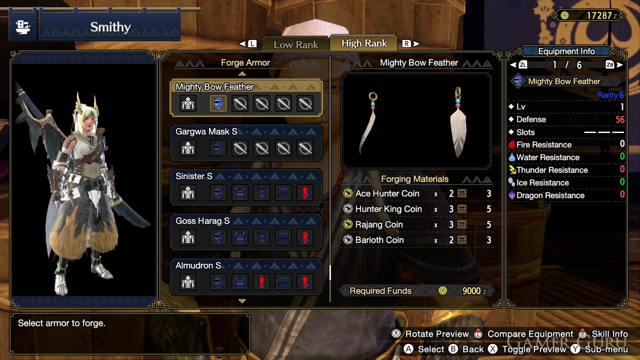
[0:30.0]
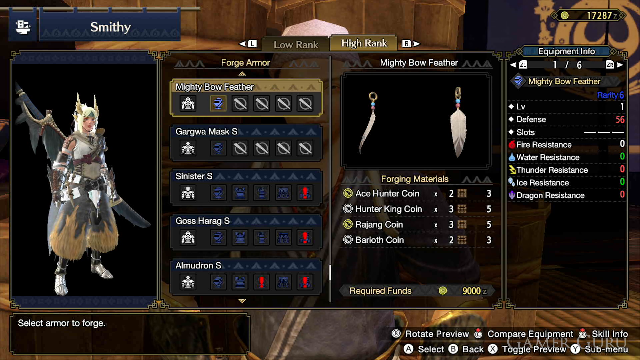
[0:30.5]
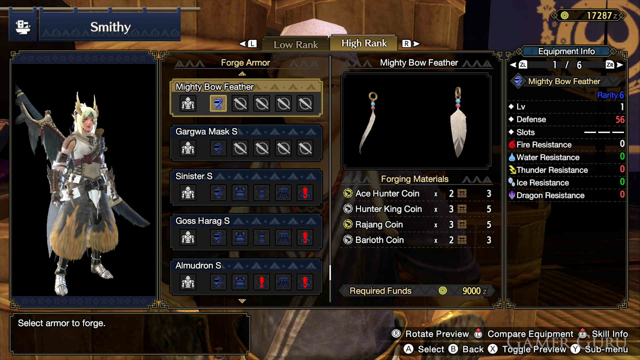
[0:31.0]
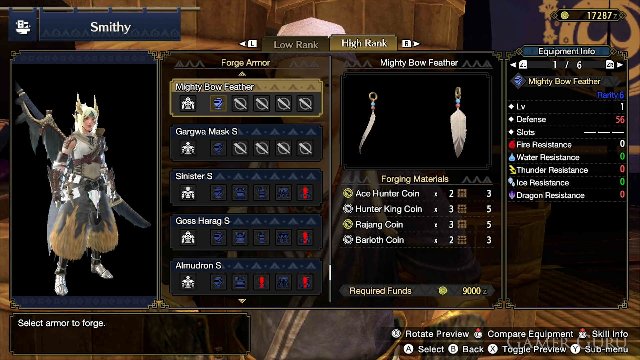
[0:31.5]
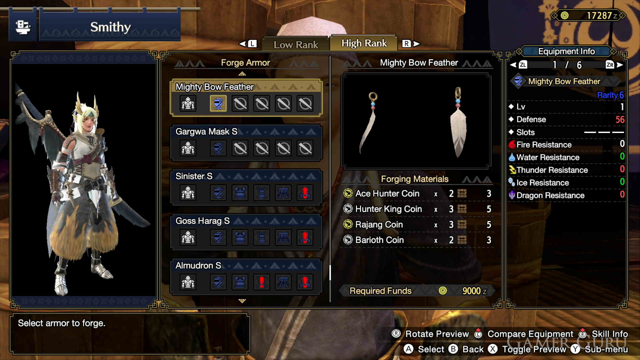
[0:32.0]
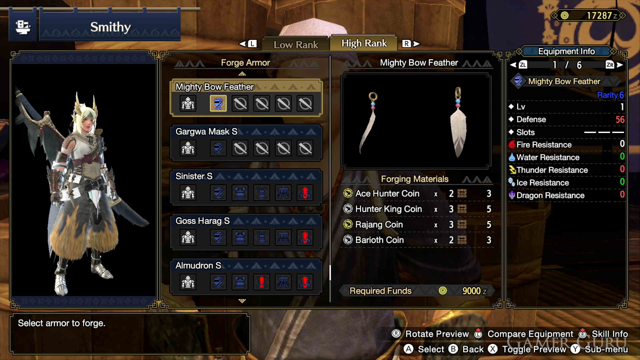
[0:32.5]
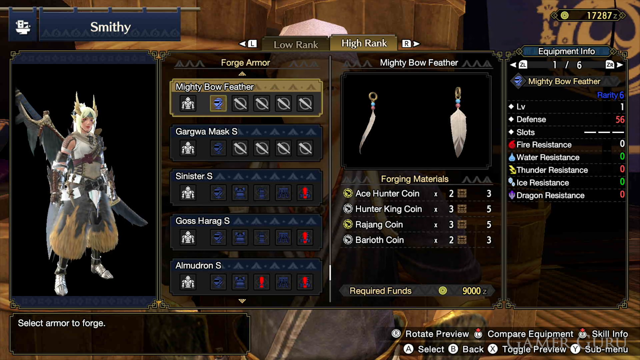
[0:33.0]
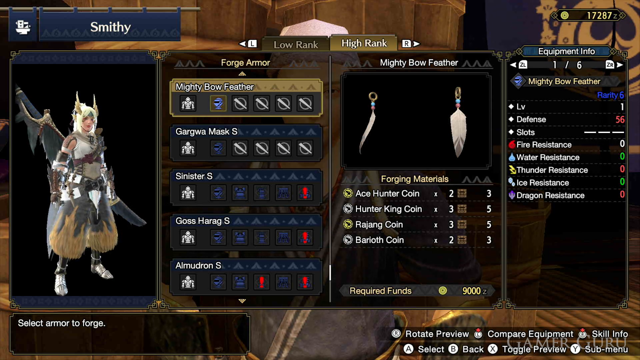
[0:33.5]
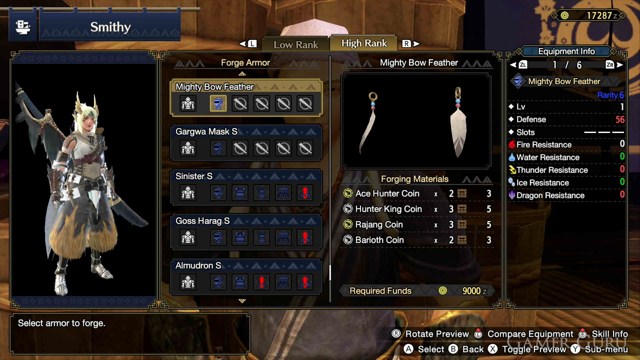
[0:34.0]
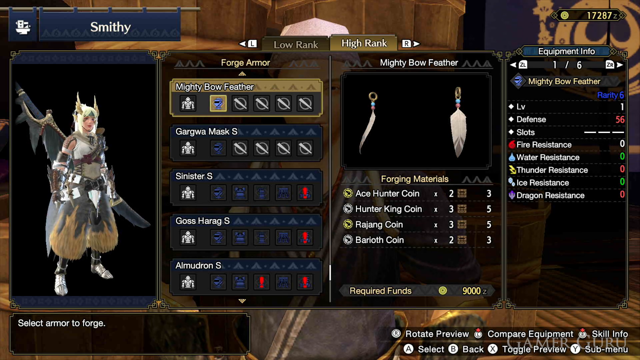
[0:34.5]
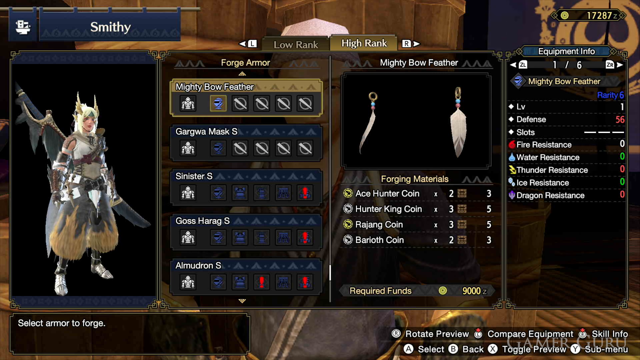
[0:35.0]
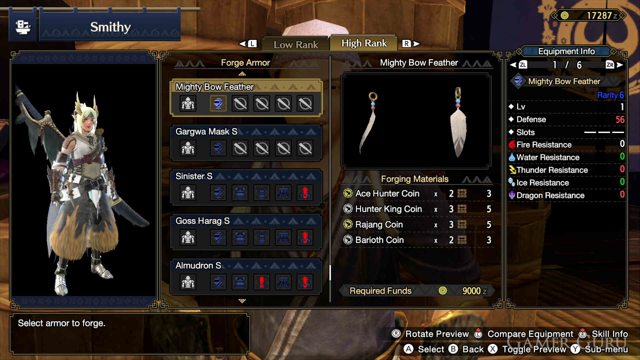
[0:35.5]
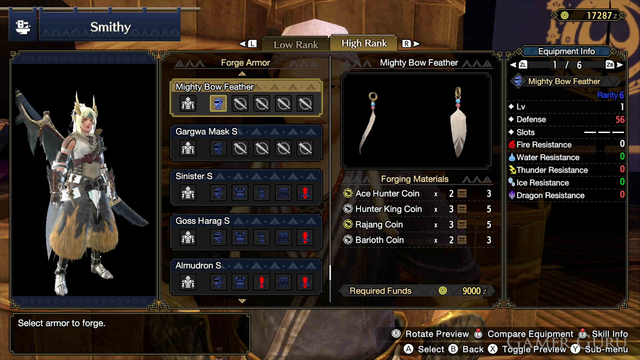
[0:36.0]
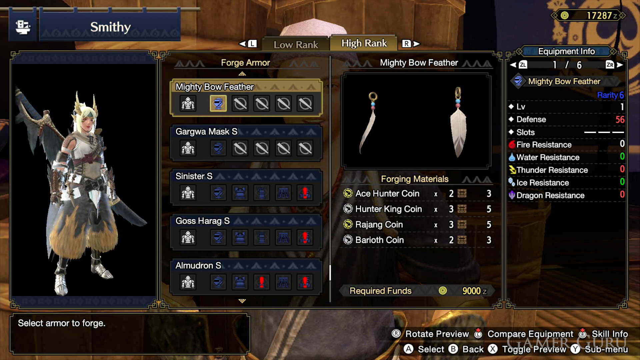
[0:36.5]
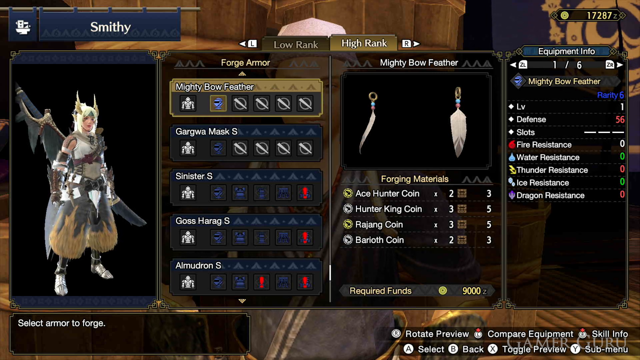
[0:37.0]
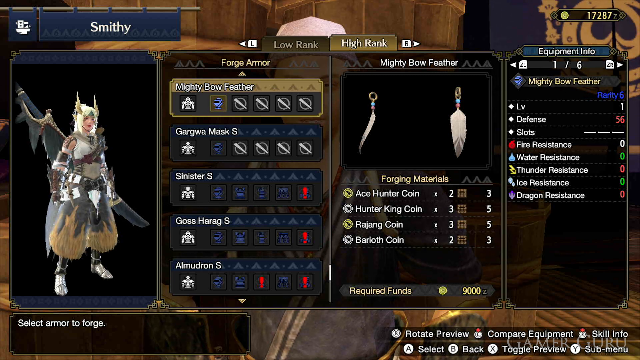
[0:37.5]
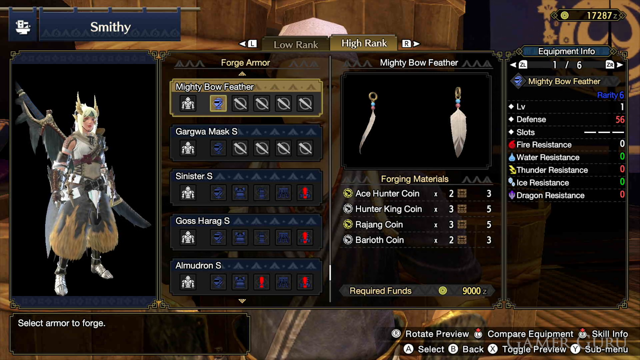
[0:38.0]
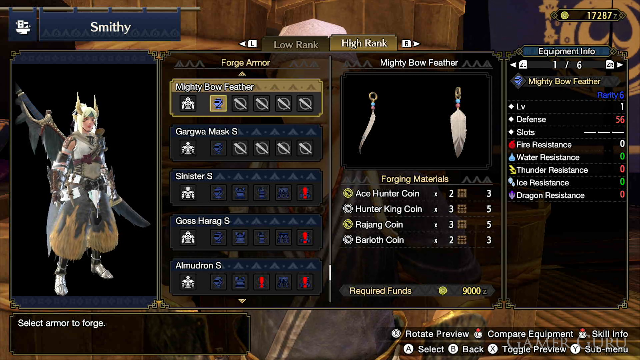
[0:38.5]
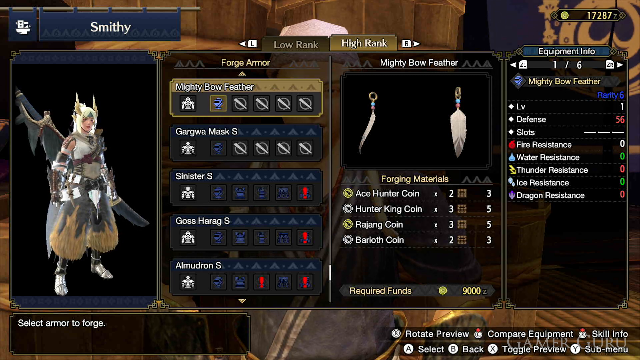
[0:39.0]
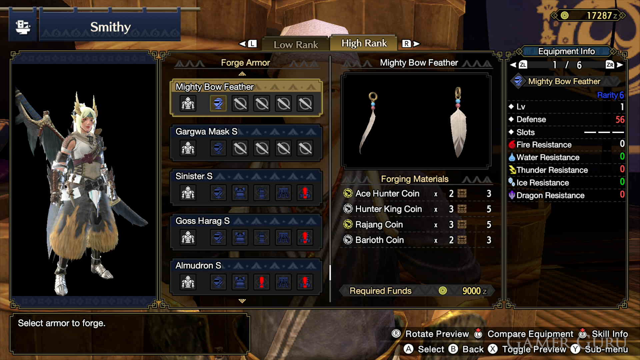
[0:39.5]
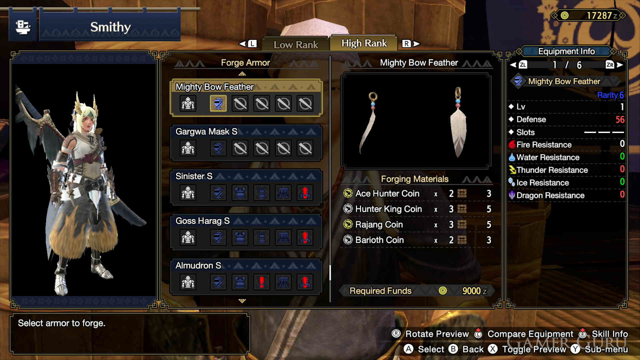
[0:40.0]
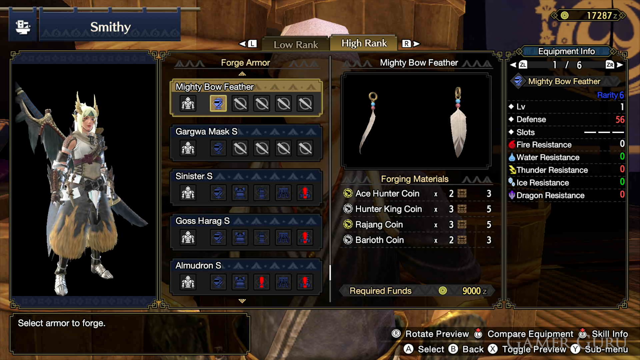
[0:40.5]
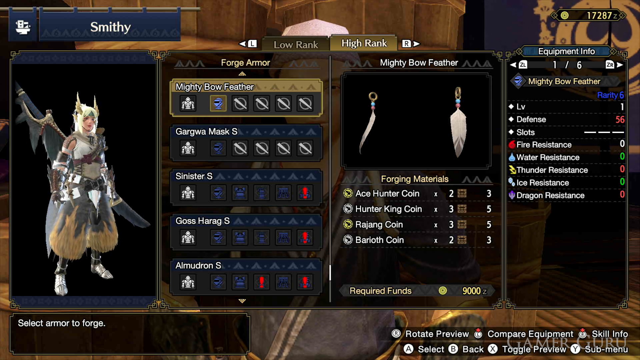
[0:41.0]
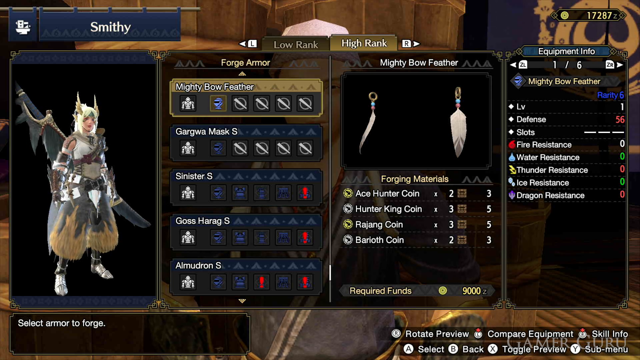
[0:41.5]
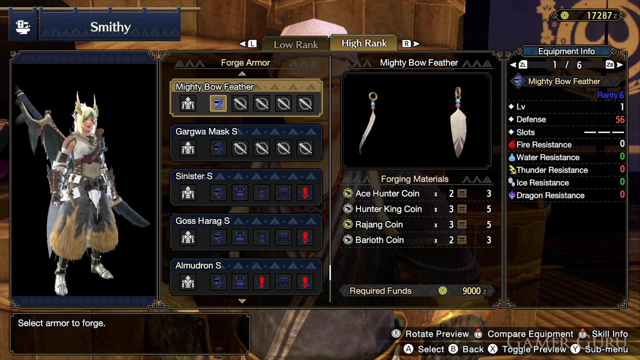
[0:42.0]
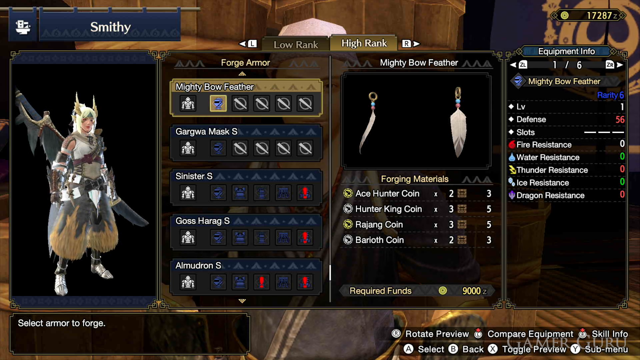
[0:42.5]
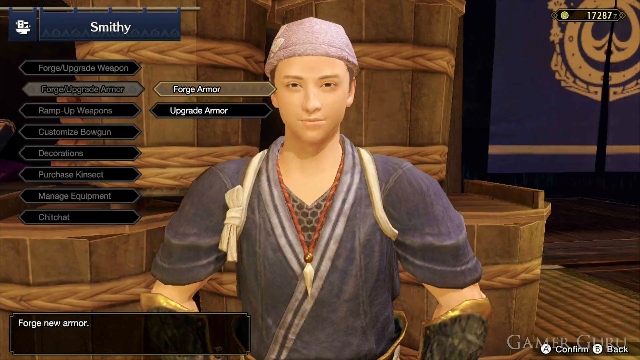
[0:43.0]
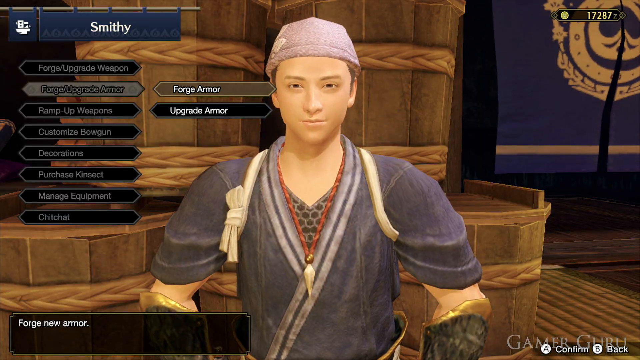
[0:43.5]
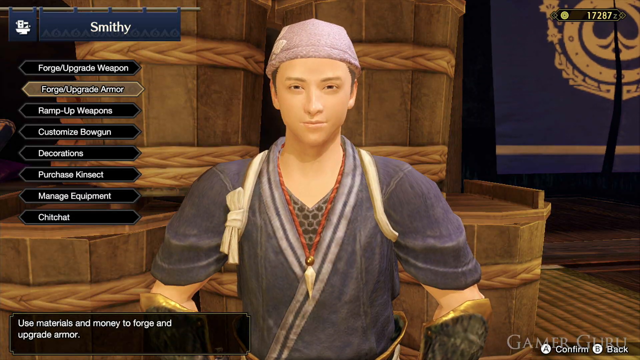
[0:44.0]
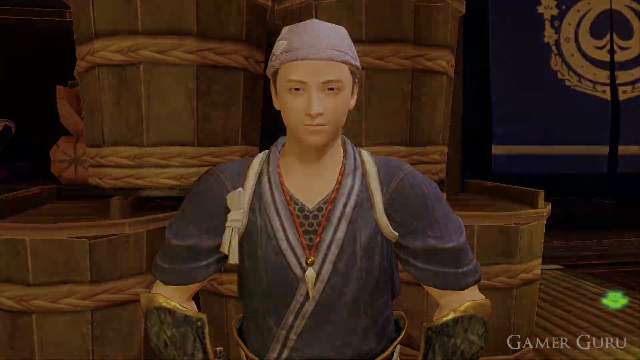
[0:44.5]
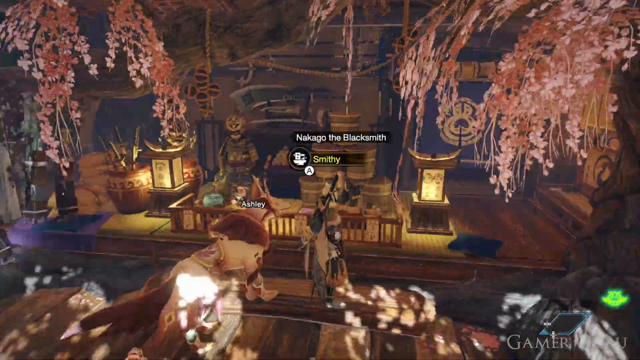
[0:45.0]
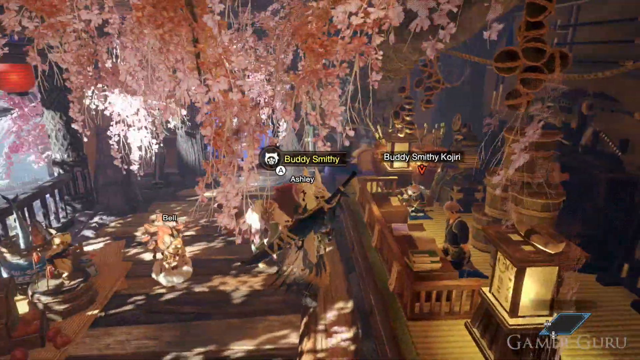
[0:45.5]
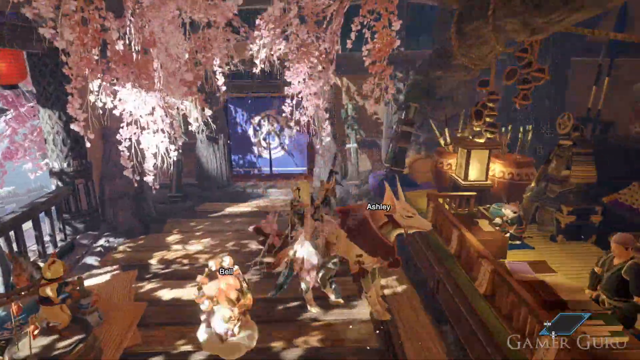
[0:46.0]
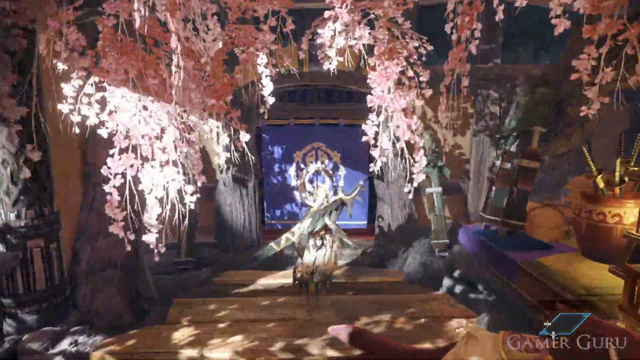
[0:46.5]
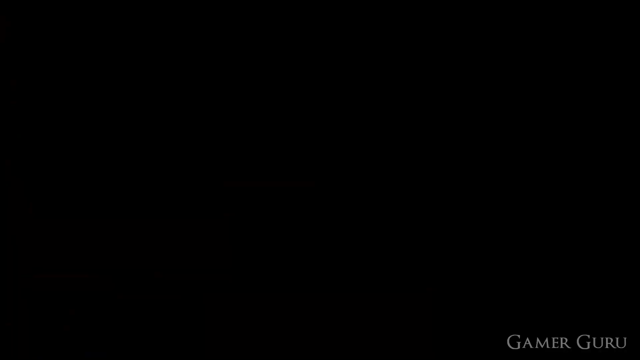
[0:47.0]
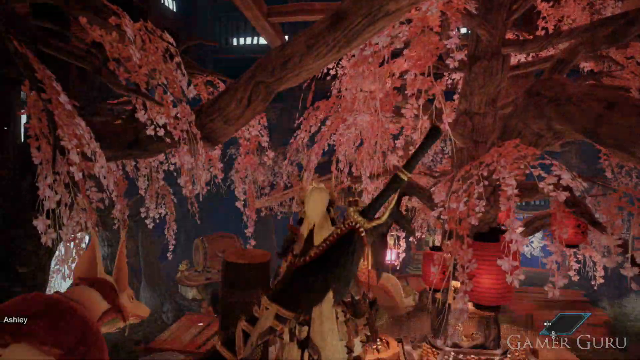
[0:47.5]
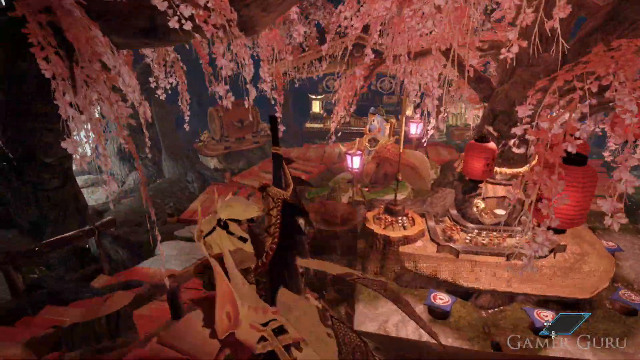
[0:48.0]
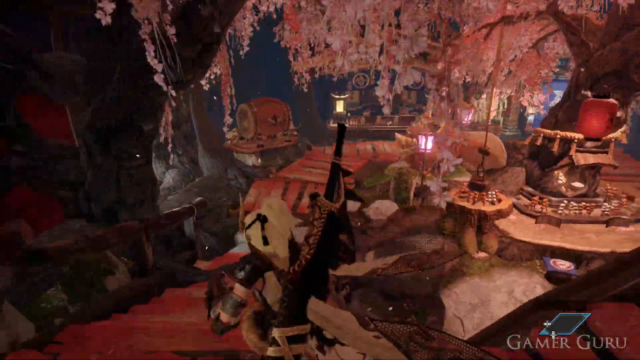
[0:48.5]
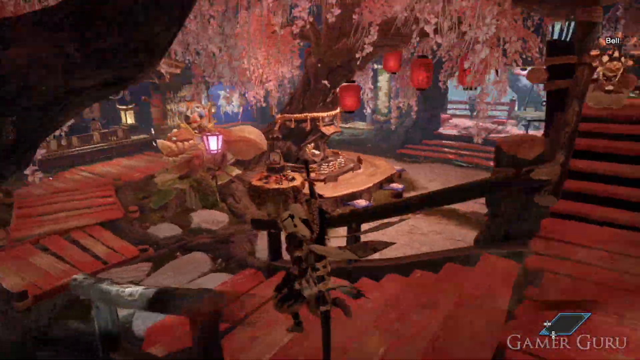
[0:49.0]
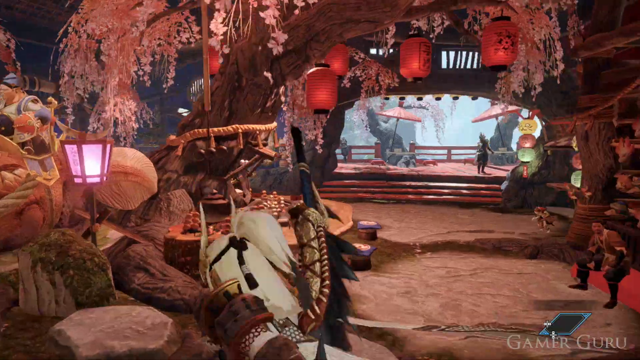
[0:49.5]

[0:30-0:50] At the top left of the video game screen, a blue banner shows a hammer and an anvil next to the word "smithy." The character currently has 17,287 of the game currency. A picture of the character on the left of the screen shows a big sword on their back and some kind of uniform or outfit. On the right, the screen reads "Equipment Info 106," "Mighty Bowfeather," "Rarity 6," "Level 1," "Defense 56," and "slots" followed by three slashes or dashes, then "Fire Resistance 0," "Water Resistance 0," "Thunder Resistance 0," "Ice Resistance 0," "Dragon Resistance 0." Next to the equipment info, "Mighty Bowfeather" is at the top with a picture of the weapon or armor, and below it "forging materials": Ace Hunter coin 2, Hunter King coin 3, Rajang coin 3, Barloth coin 2.